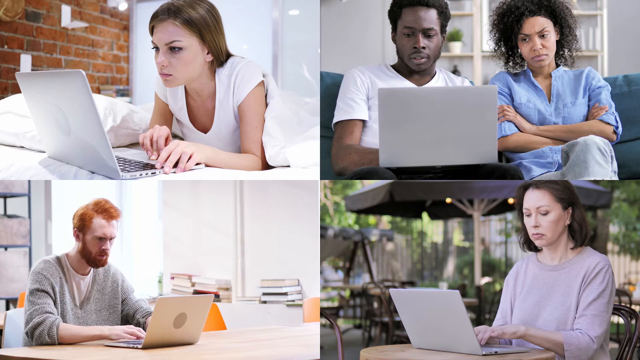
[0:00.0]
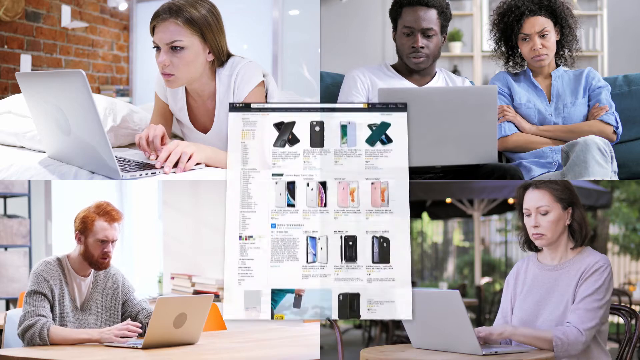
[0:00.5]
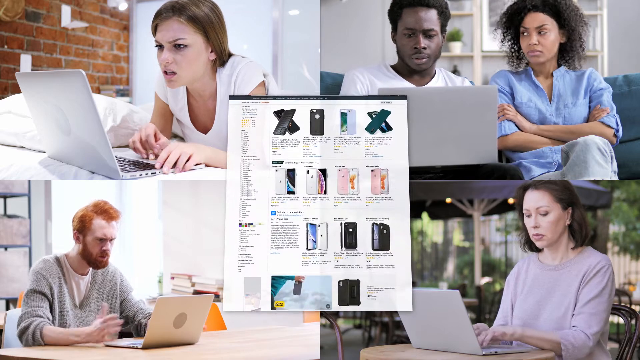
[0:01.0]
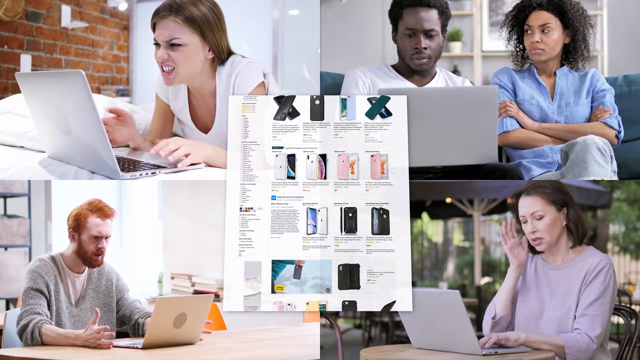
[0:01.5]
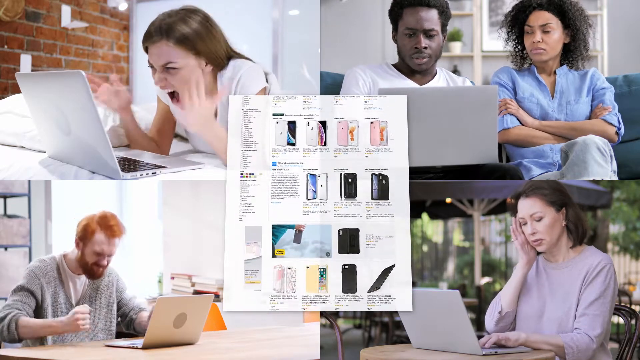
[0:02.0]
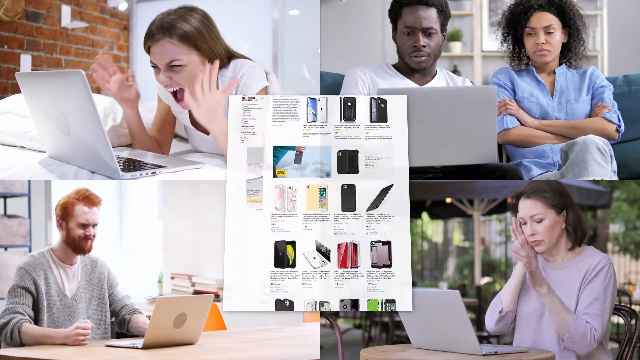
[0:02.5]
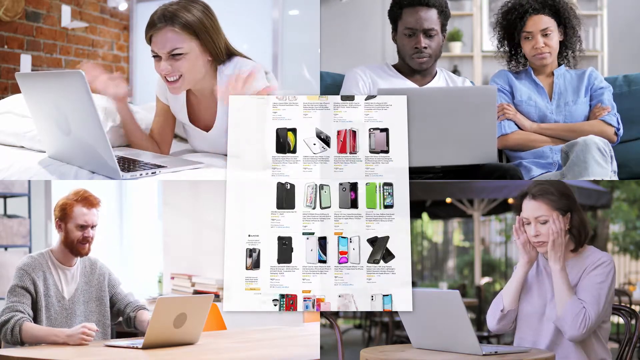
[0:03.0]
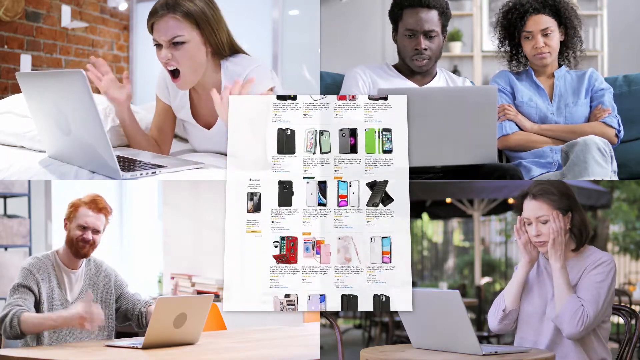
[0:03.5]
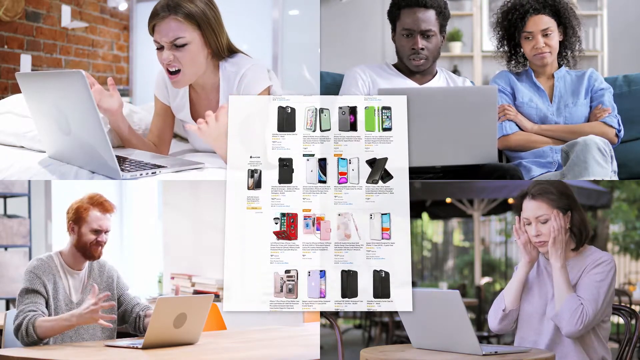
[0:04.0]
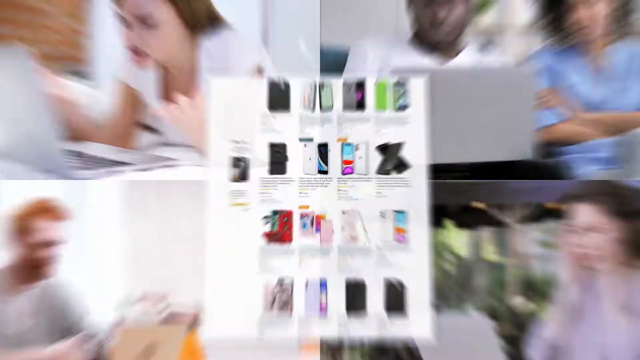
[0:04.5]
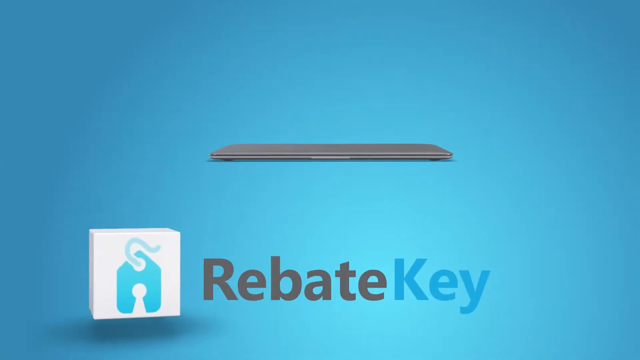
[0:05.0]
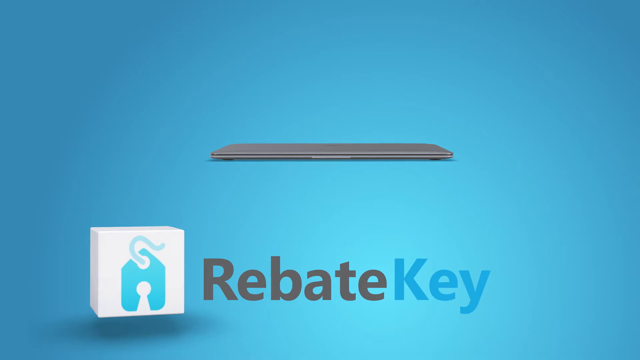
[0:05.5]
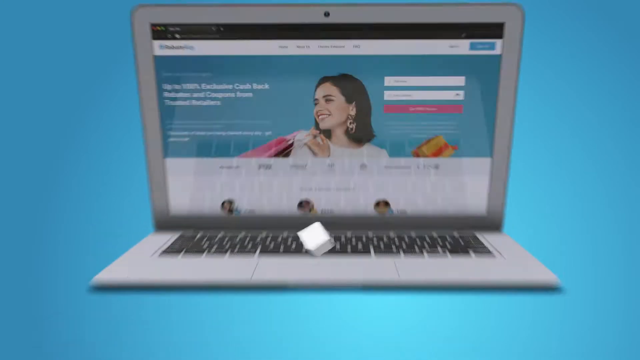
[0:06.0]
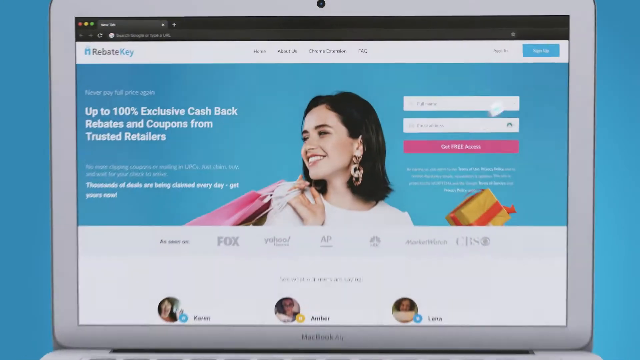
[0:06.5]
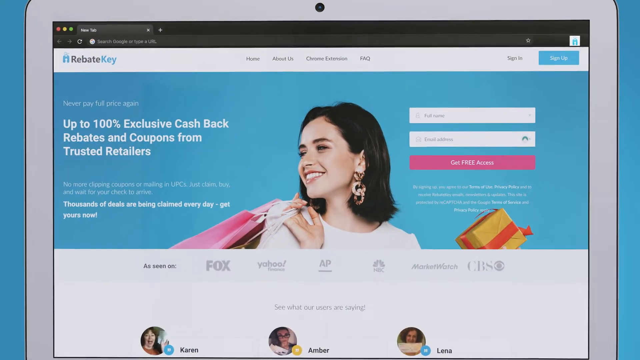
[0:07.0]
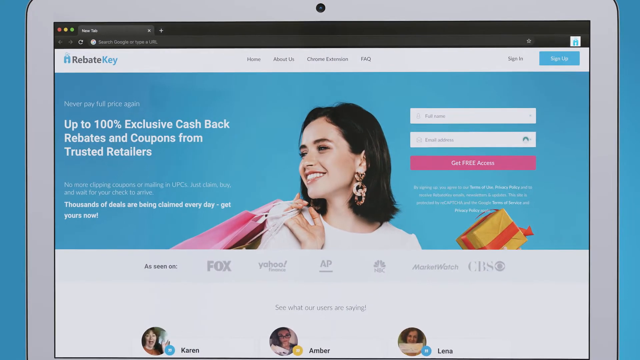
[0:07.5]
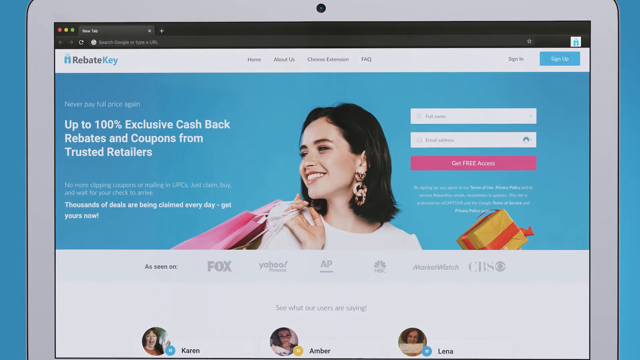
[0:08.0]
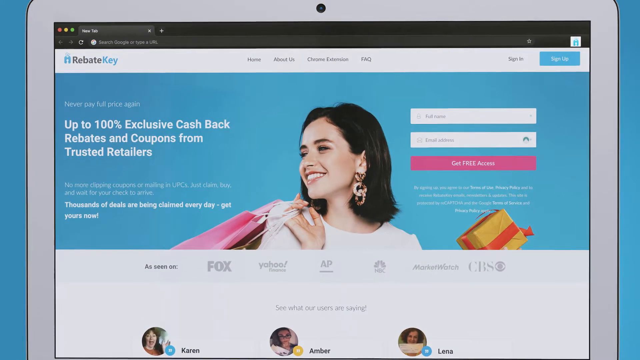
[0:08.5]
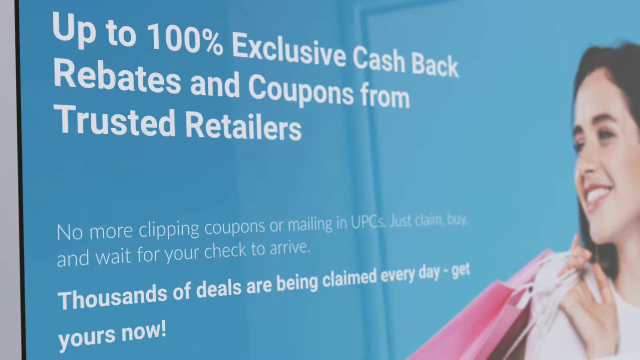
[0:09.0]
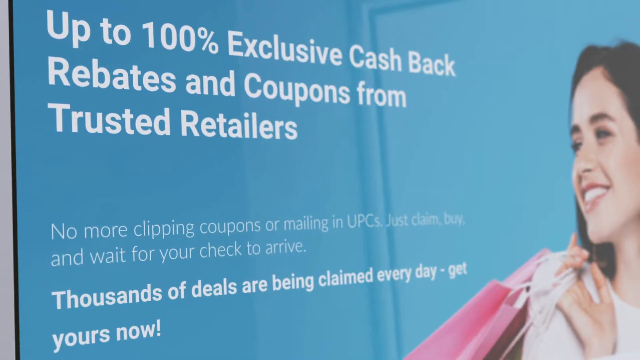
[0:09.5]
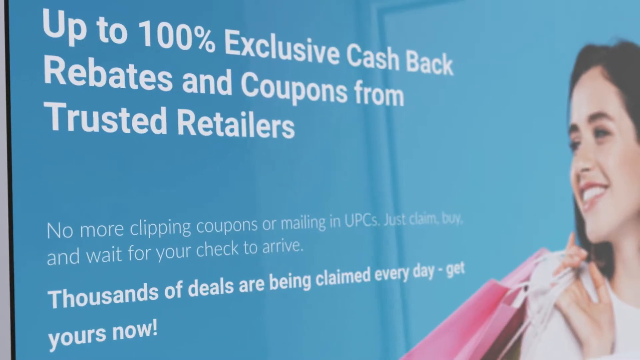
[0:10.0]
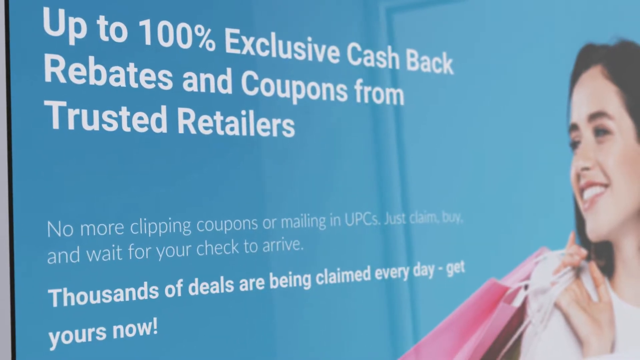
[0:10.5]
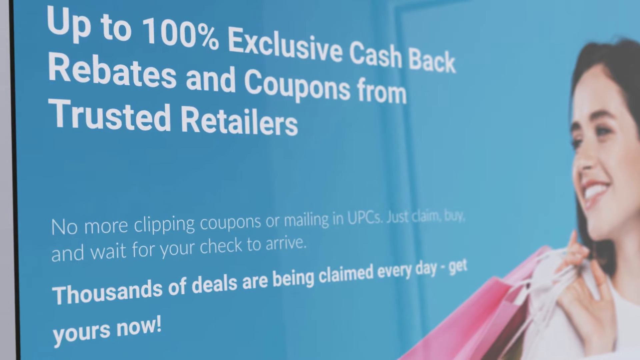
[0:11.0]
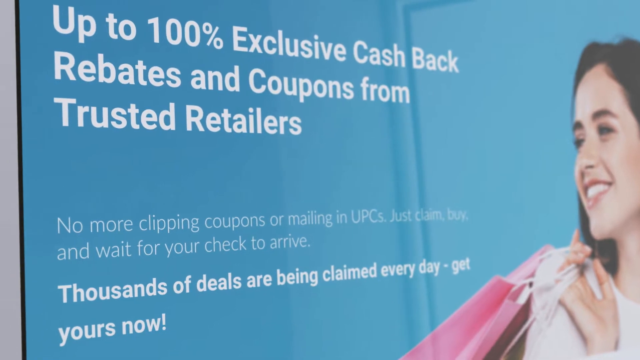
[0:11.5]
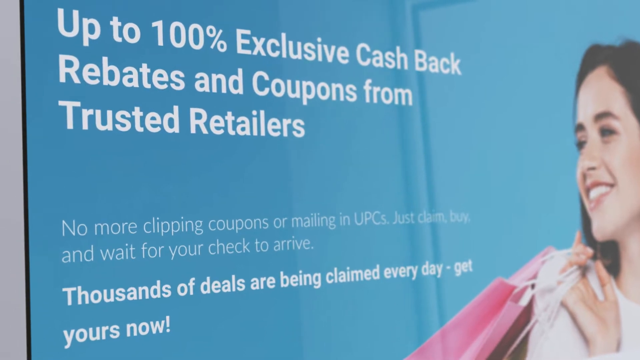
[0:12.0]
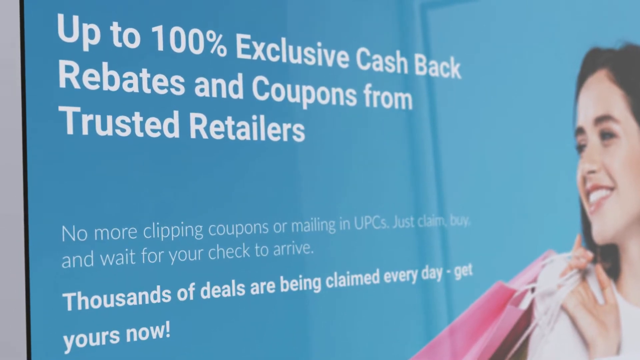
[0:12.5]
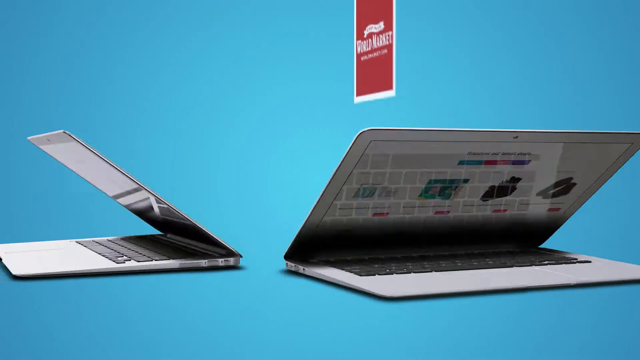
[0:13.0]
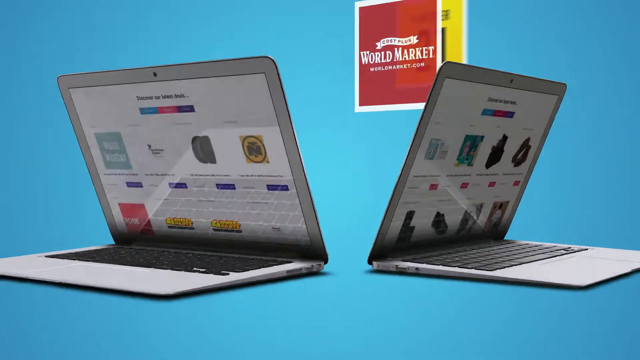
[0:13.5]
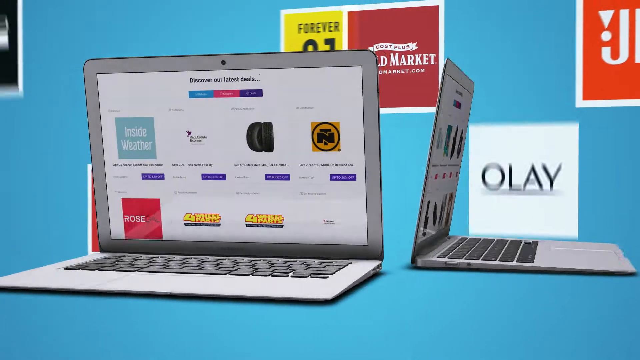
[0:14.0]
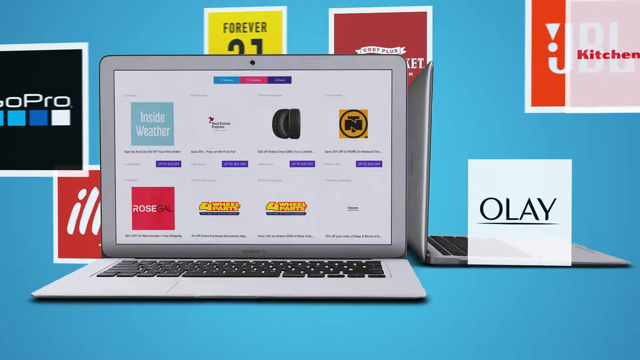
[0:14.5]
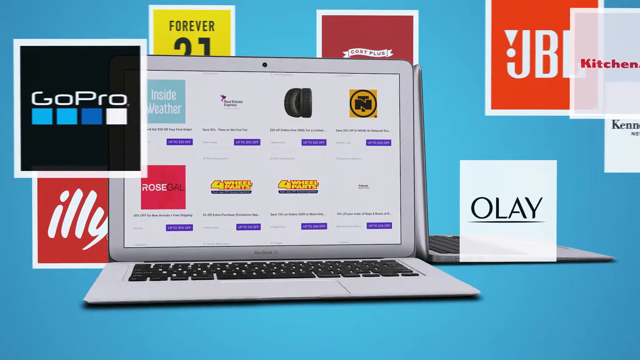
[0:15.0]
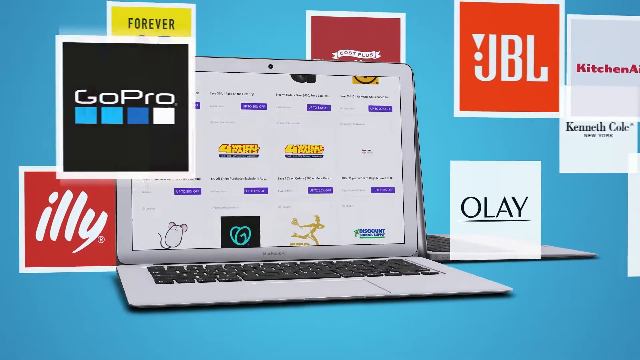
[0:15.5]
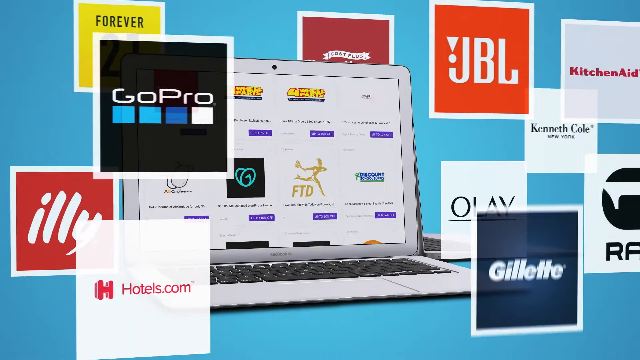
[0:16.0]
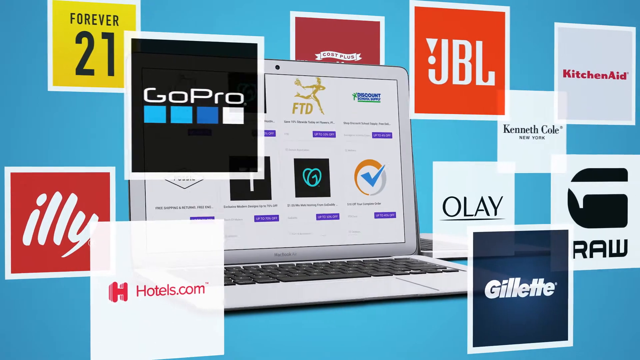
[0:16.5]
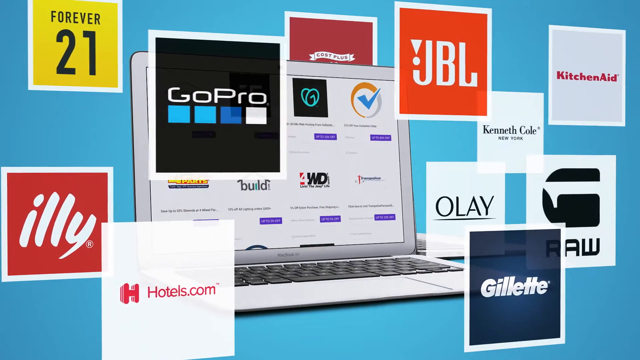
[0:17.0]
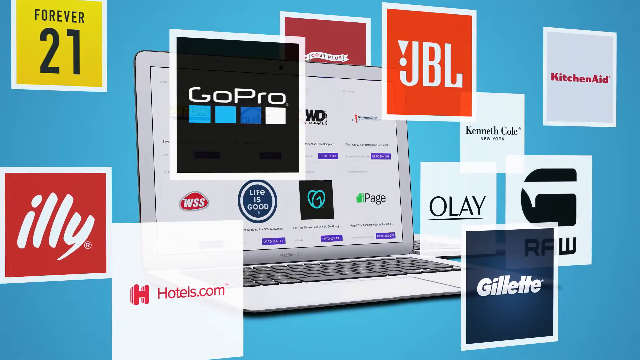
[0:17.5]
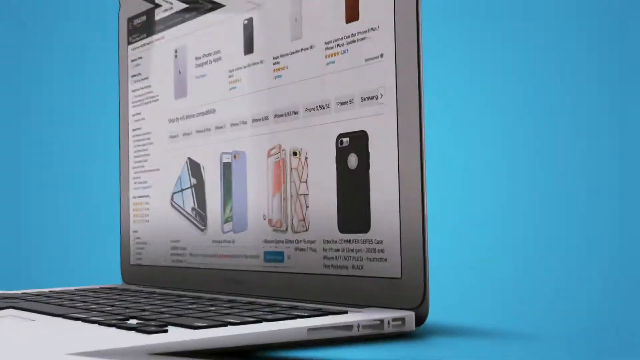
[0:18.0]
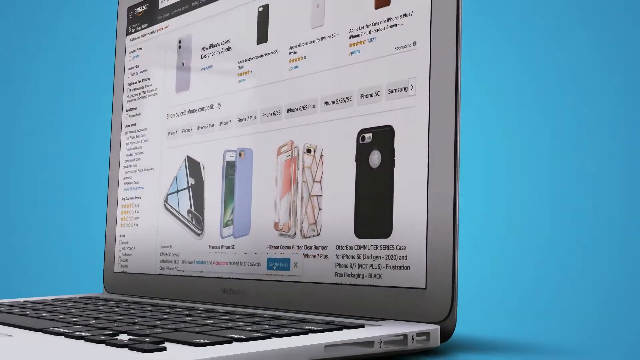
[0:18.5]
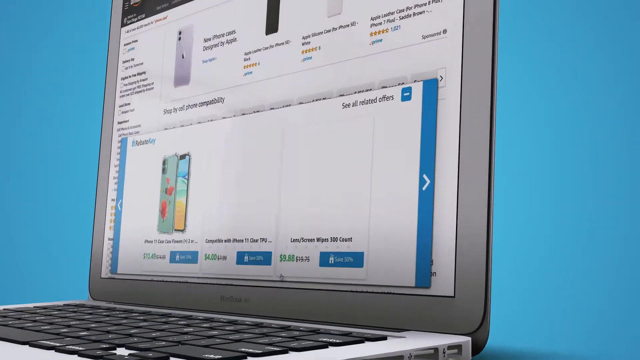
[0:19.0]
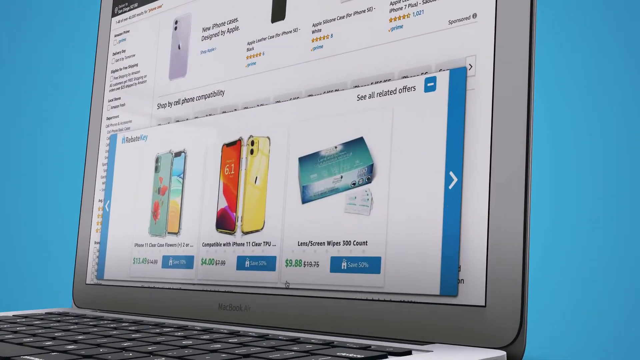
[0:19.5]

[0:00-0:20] People are shown getting really mad at their computers. Then something called RebateKey appears, with text reading "up to 100% exclusive cash back rebates and coupons from trusted retailers no more clipping coupons or mailing in UPCs just claim buy and wait for your check to arrive thousands of deals are being claimed every day get yours now." Different companies are then listed, apparently ones offering these deals, such as hotels.com, GoPro, forever 21, Olay, KitchenAid and JBL. A website is shown with people on it, and it has something to do with phones; the website displays different phones.